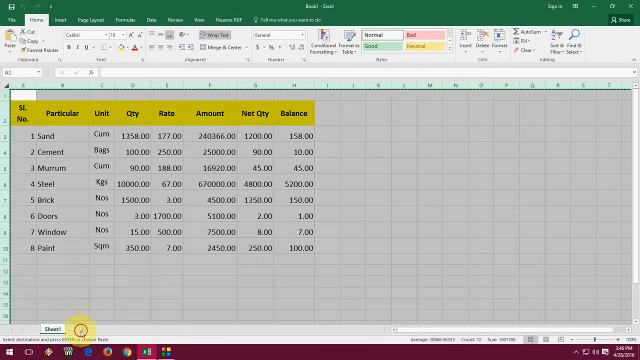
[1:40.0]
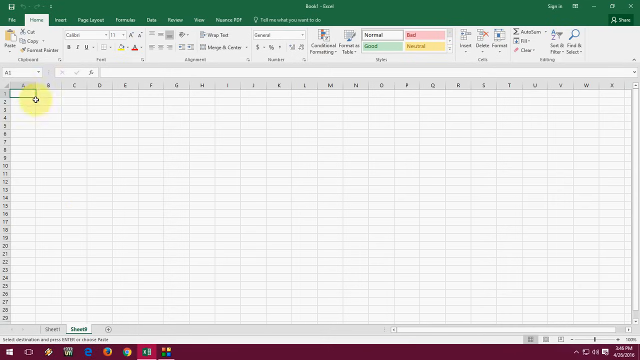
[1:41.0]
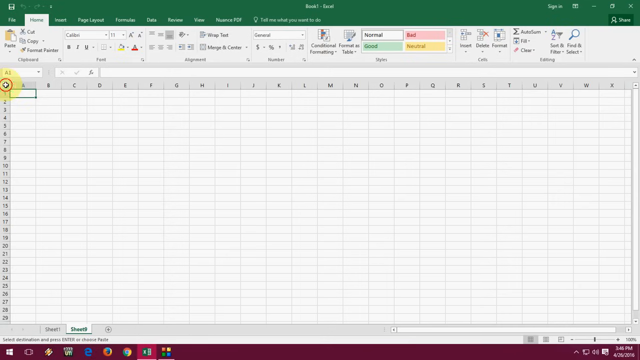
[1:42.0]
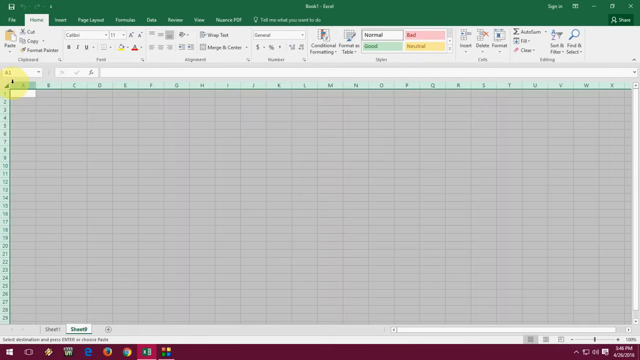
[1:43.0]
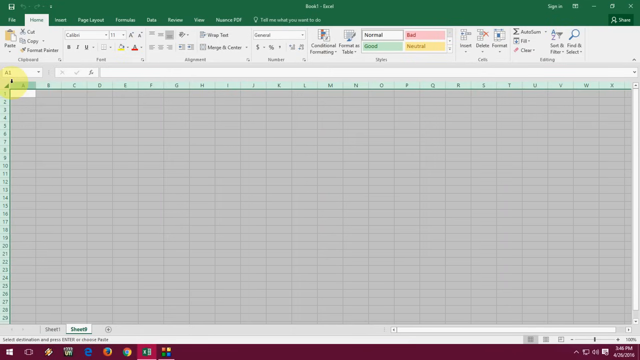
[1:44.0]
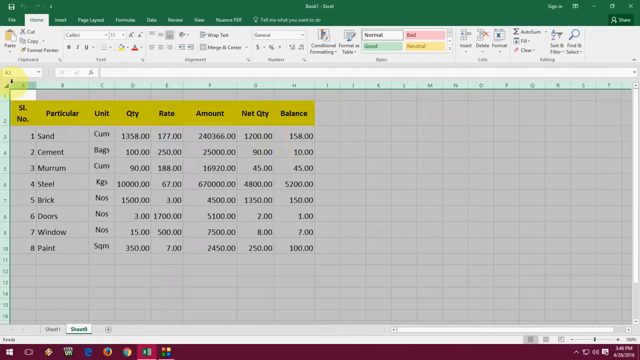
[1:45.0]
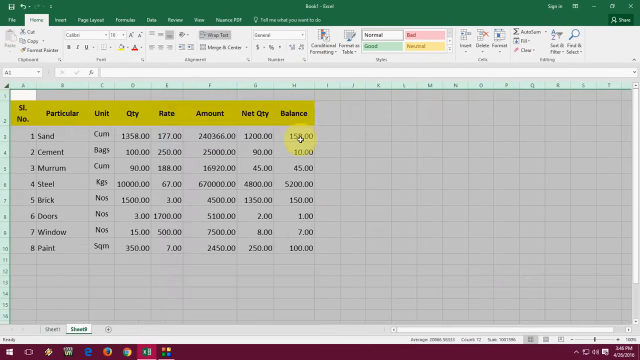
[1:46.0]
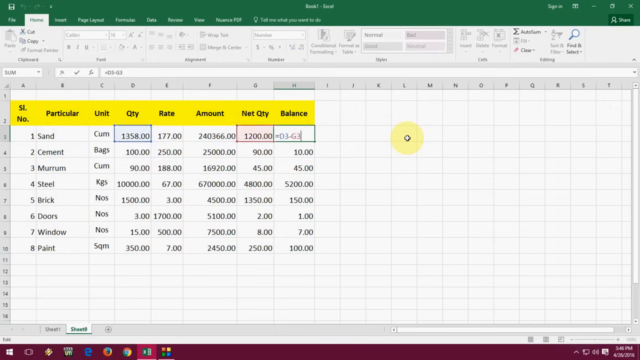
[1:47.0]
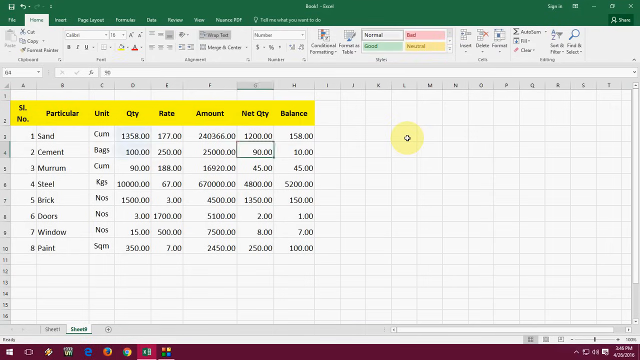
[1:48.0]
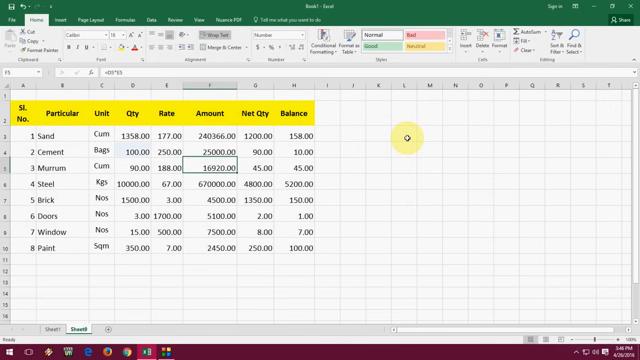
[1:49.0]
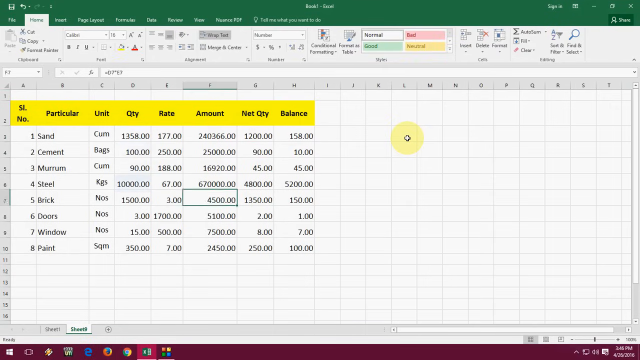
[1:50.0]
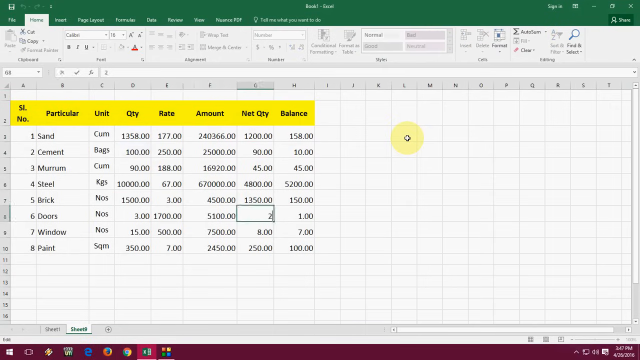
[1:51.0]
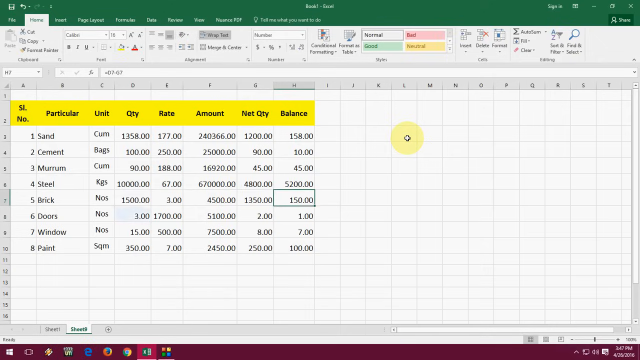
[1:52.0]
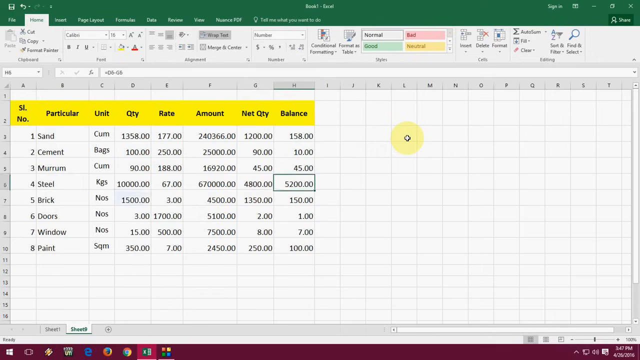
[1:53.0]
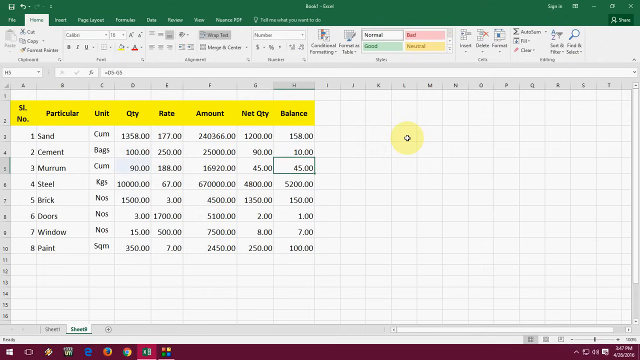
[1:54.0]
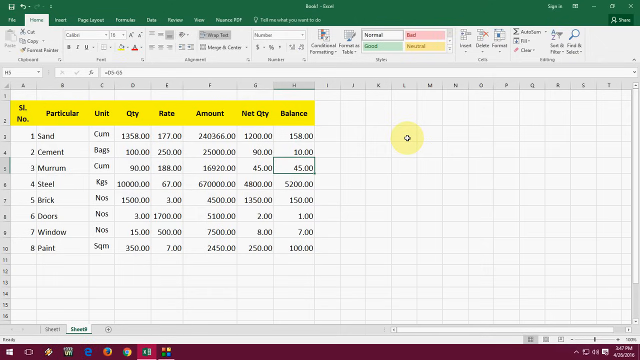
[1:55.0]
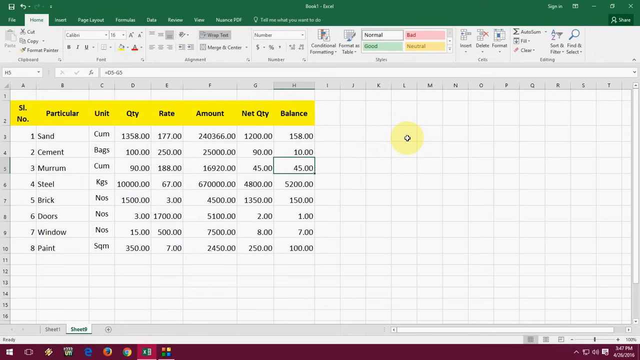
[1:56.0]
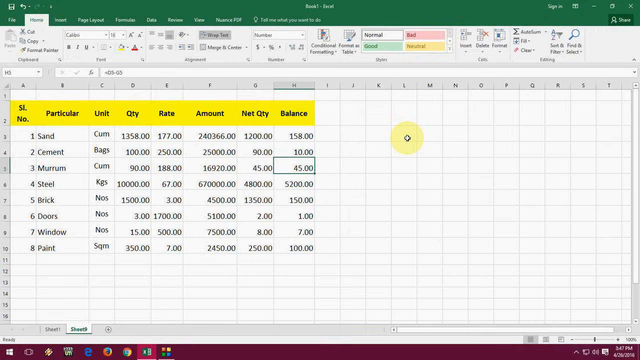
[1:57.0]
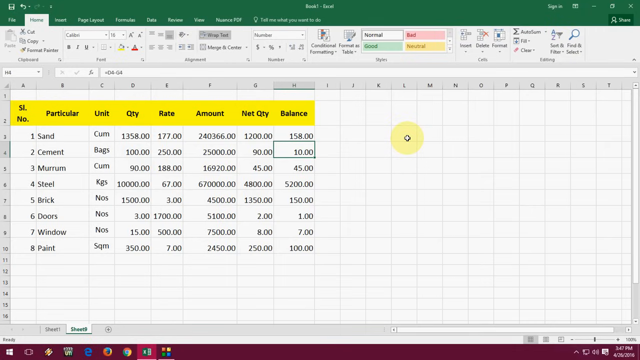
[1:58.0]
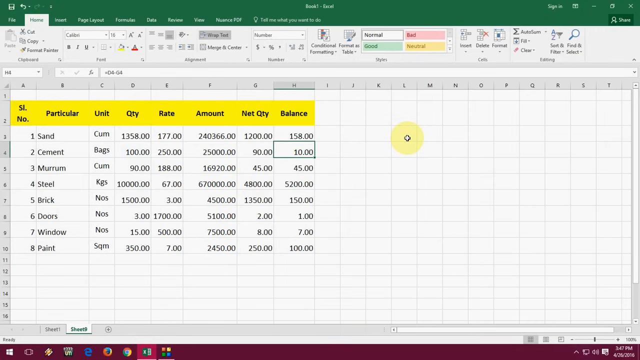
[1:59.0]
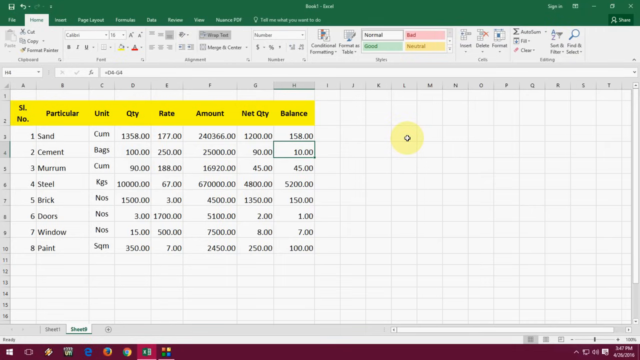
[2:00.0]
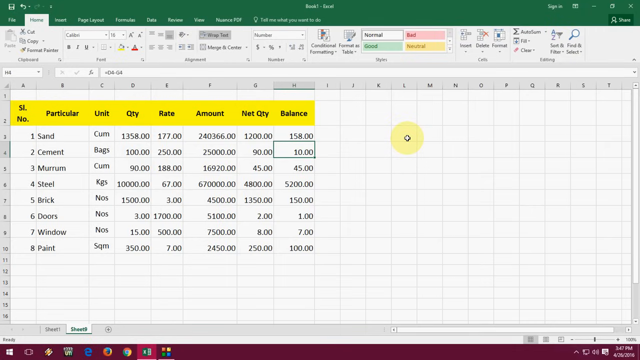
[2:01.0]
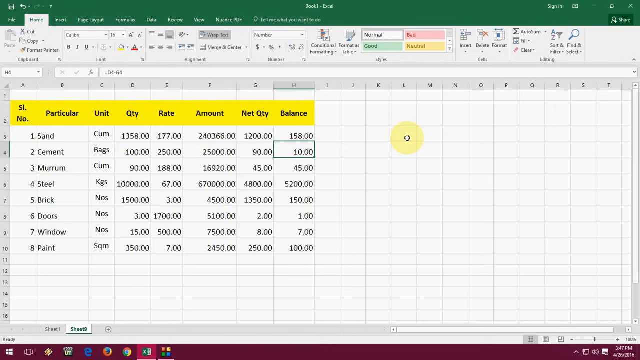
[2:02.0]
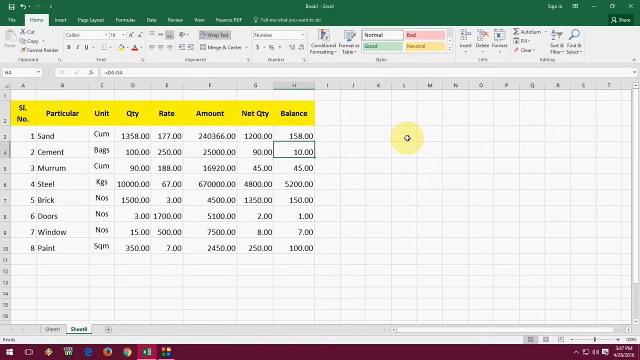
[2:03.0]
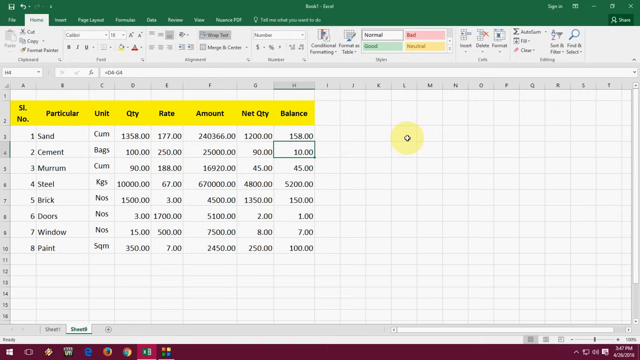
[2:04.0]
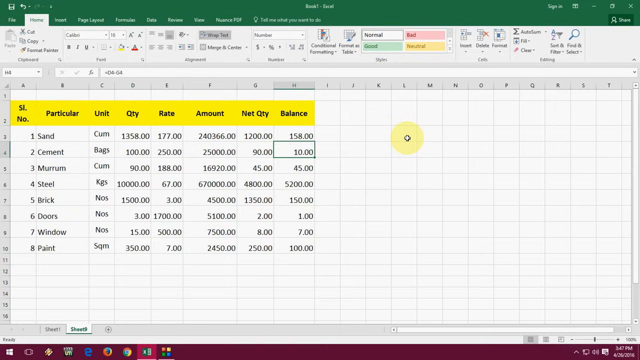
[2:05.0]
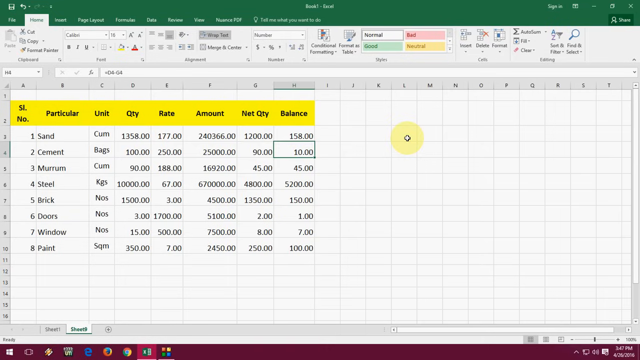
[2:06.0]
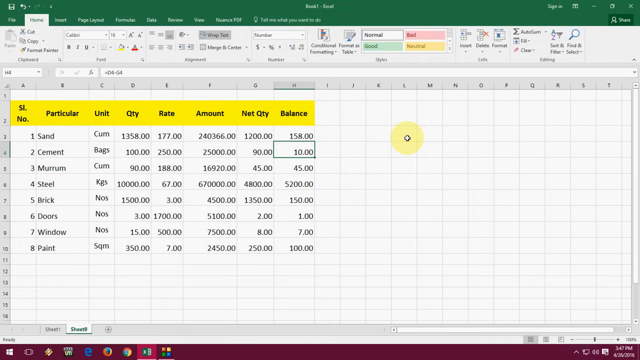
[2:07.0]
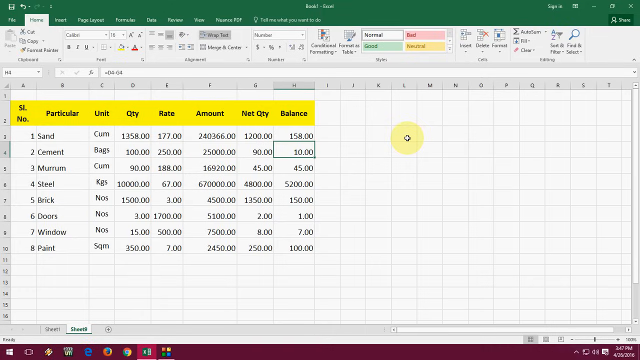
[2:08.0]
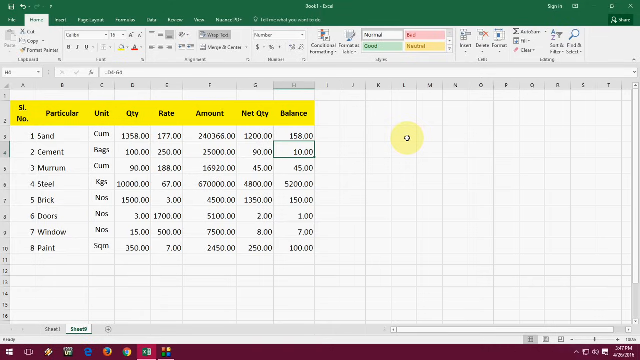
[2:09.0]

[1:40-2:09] The data entry program is still shown. A green rectangle spans the top tenth of the program area, with a menu on it whose readable words are file, home, apparently insert, page layout, formulas, date, review and view; the rest is blurry and cannot be made out. Below is a gray menu taking up about two tenths of the screen, or maybe 15%. Readable items include paste, with a clipboard with a piece of paper above it, then cut and copy, with the rest unreadable; to the right are bold, italic and underline options. Below the gray menu is the data entry section, with numbers 1 through 16 running vertically along the side and letters A through T across the top.